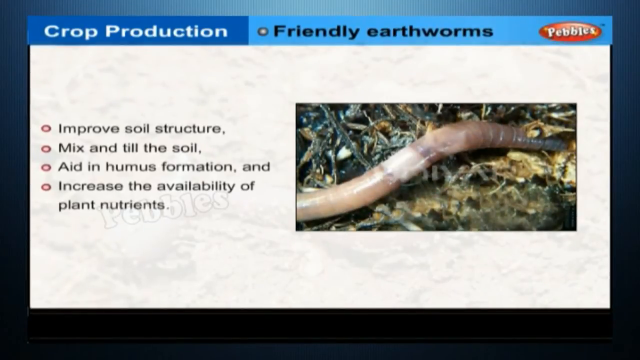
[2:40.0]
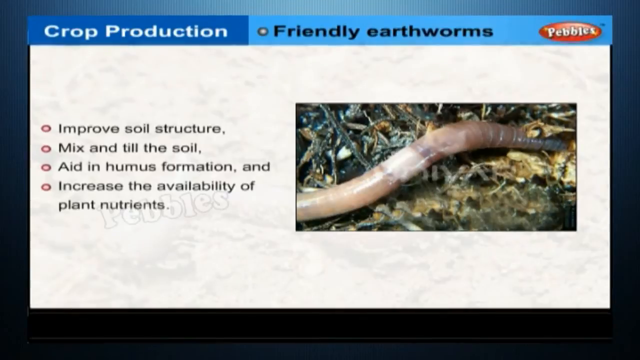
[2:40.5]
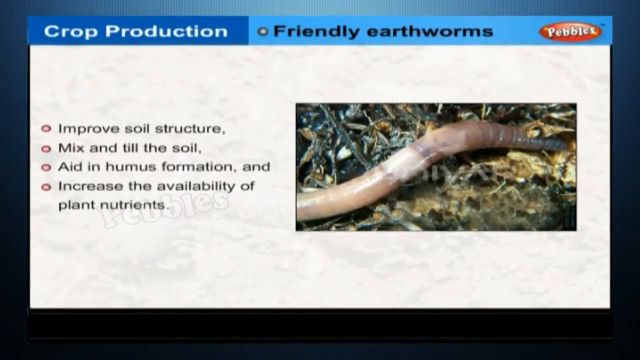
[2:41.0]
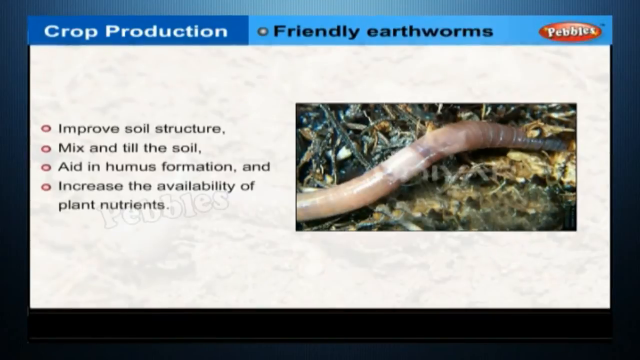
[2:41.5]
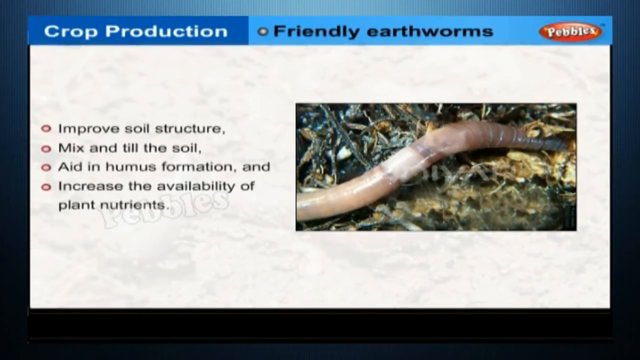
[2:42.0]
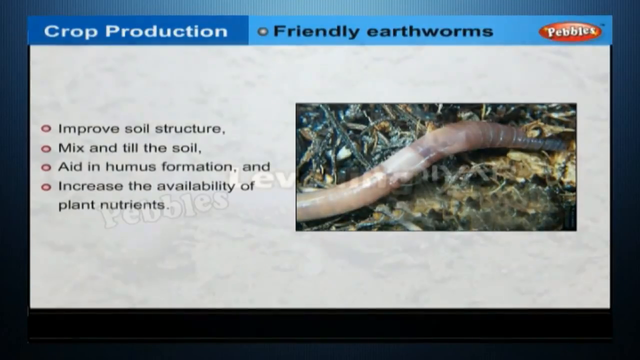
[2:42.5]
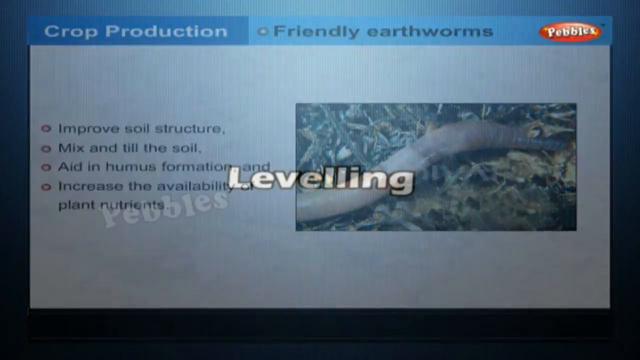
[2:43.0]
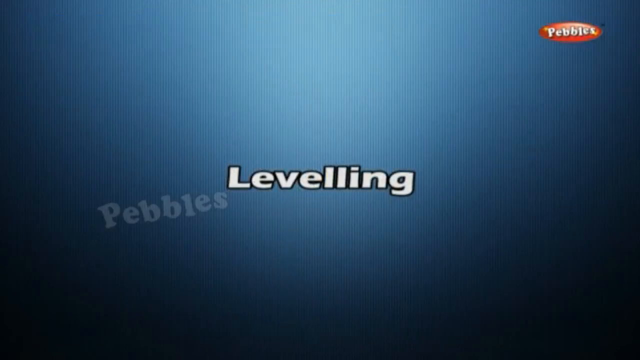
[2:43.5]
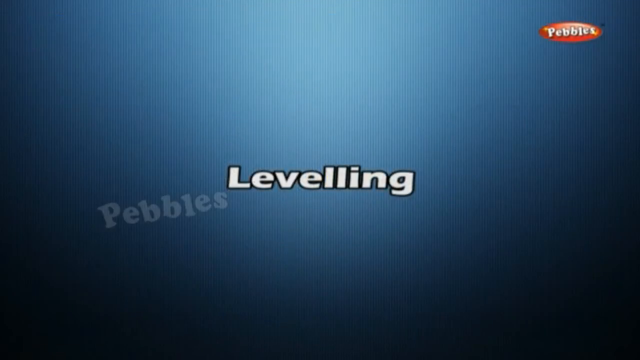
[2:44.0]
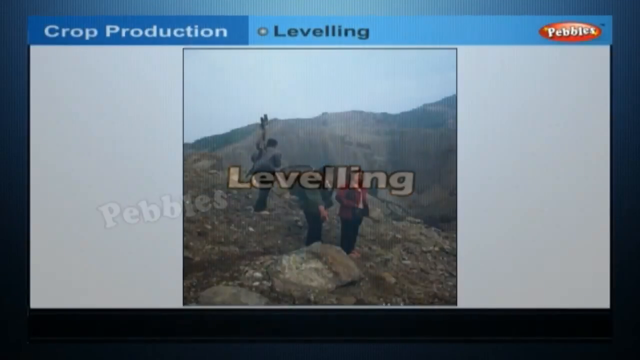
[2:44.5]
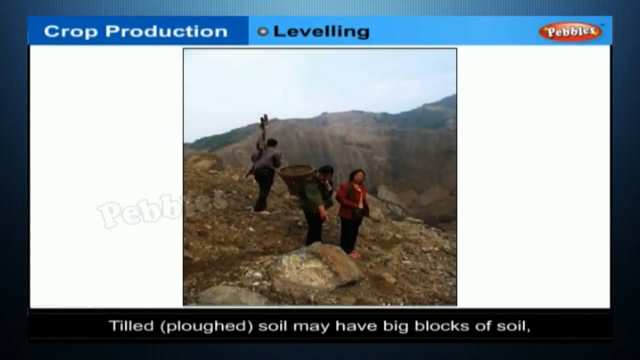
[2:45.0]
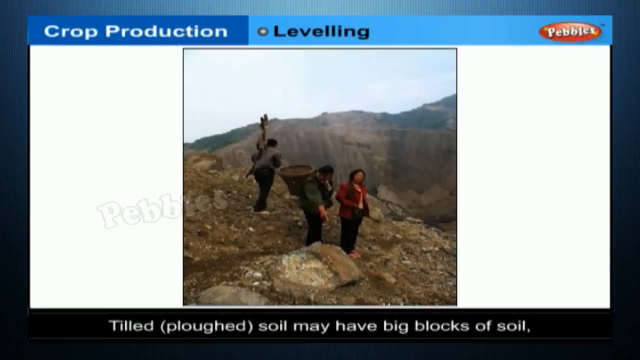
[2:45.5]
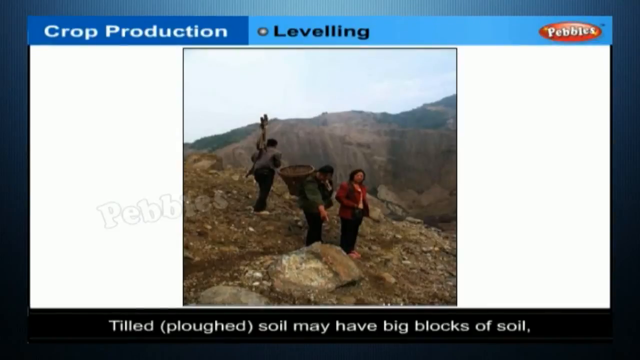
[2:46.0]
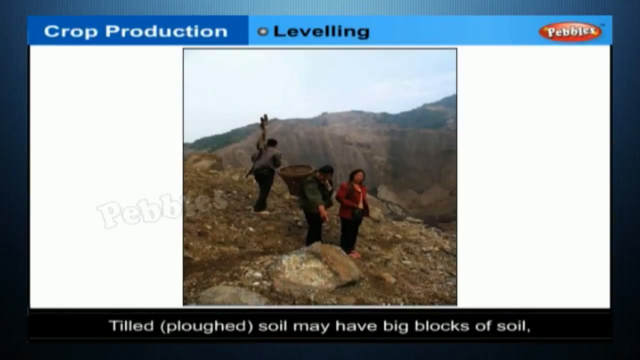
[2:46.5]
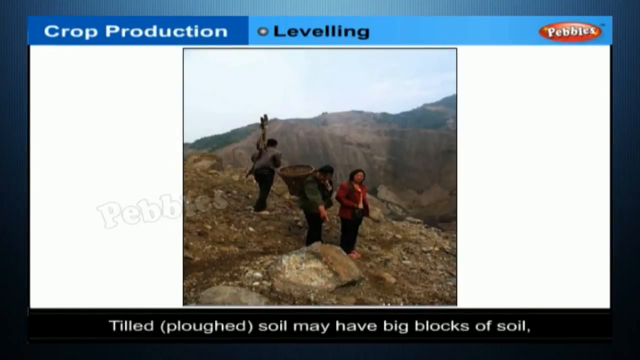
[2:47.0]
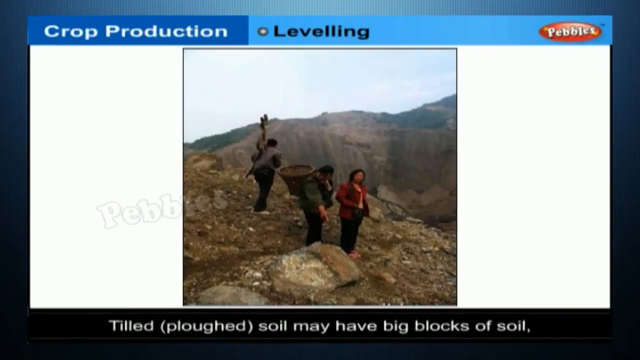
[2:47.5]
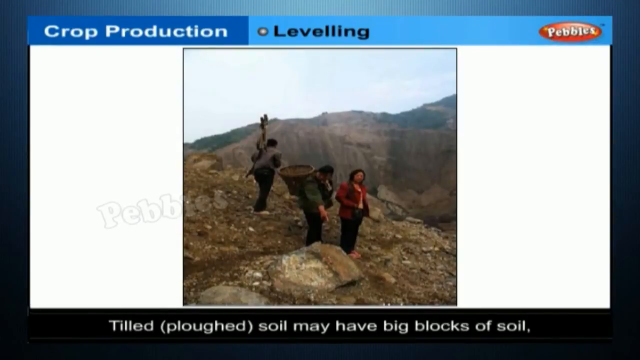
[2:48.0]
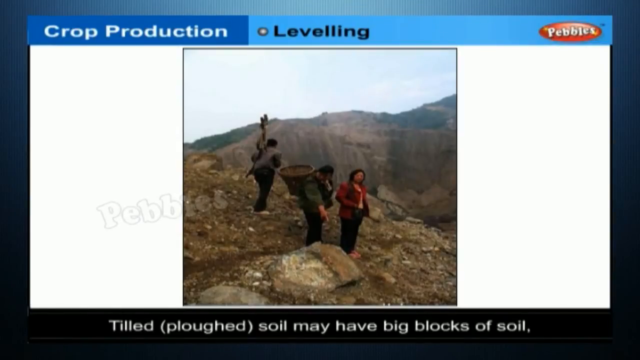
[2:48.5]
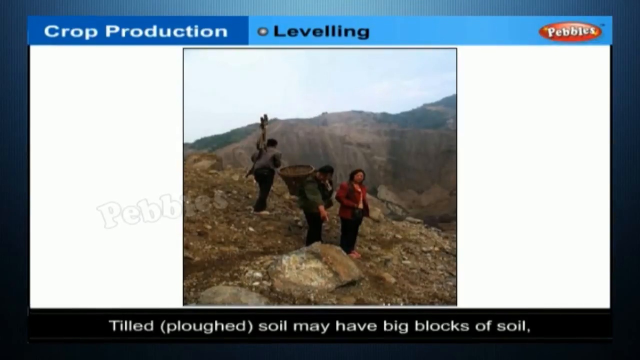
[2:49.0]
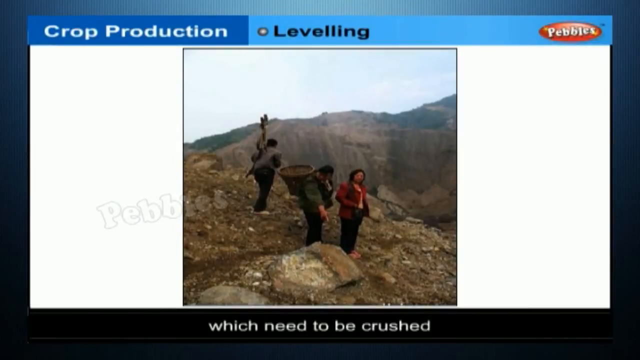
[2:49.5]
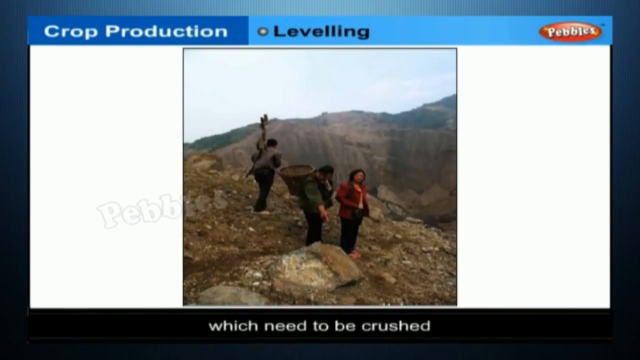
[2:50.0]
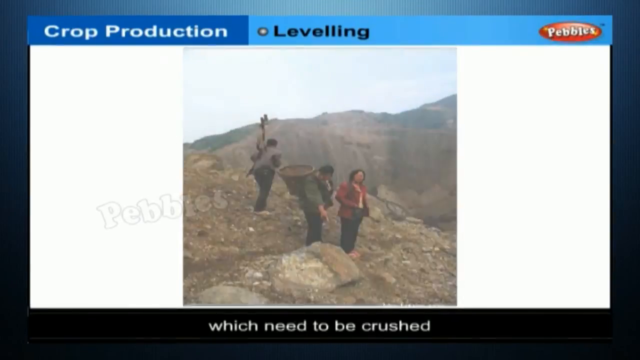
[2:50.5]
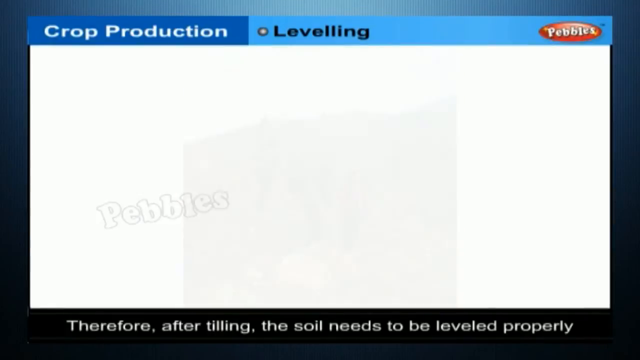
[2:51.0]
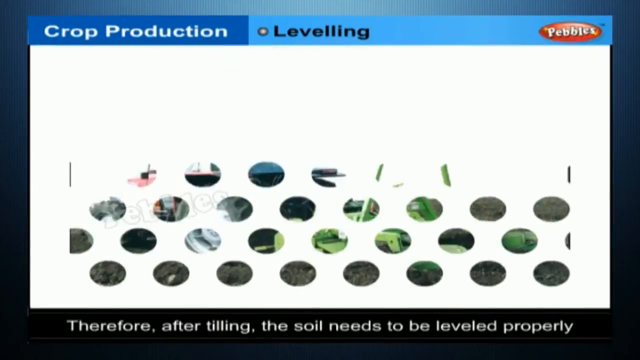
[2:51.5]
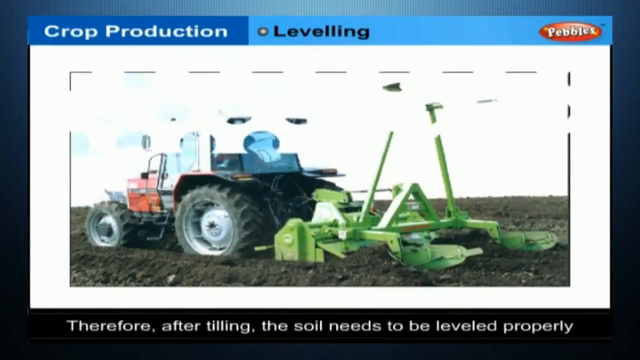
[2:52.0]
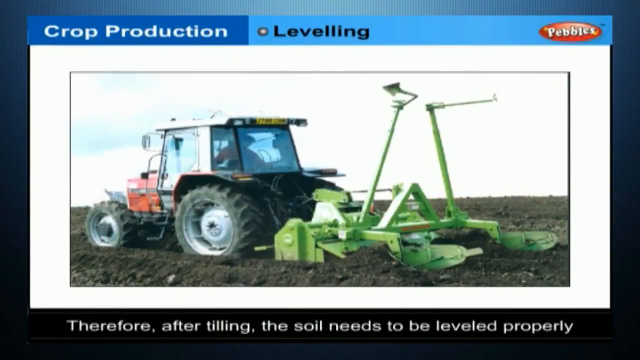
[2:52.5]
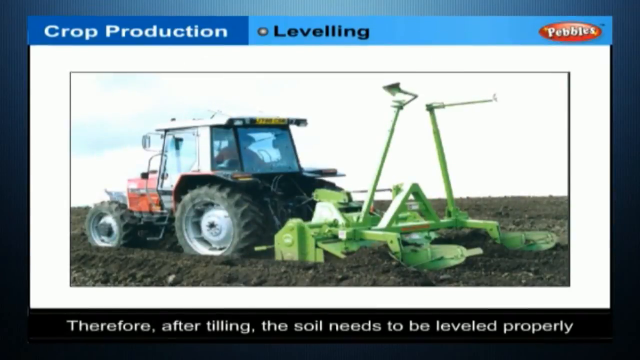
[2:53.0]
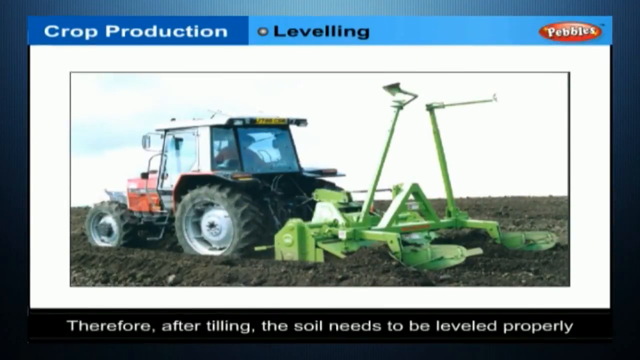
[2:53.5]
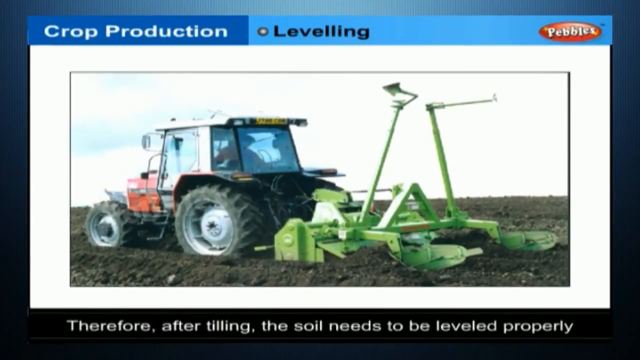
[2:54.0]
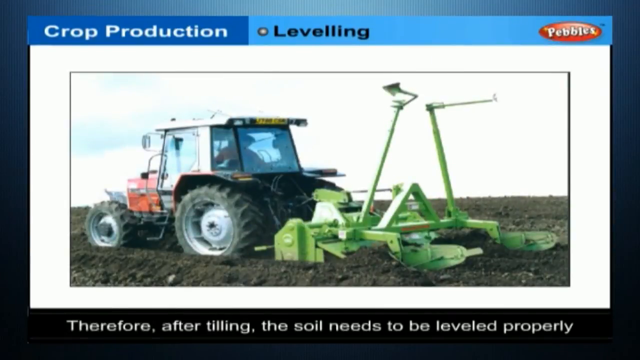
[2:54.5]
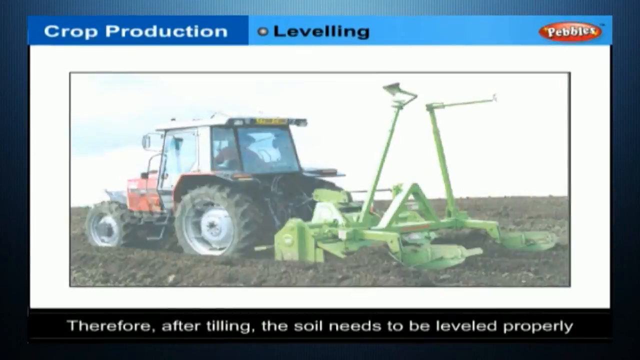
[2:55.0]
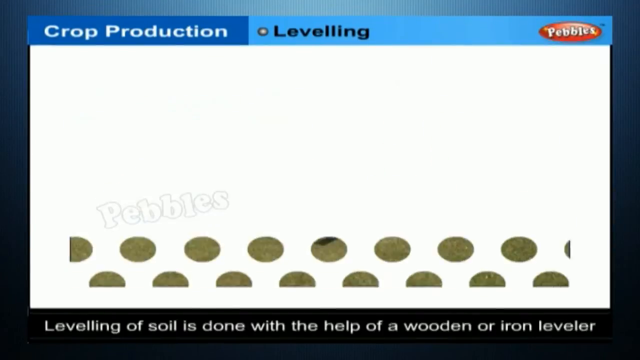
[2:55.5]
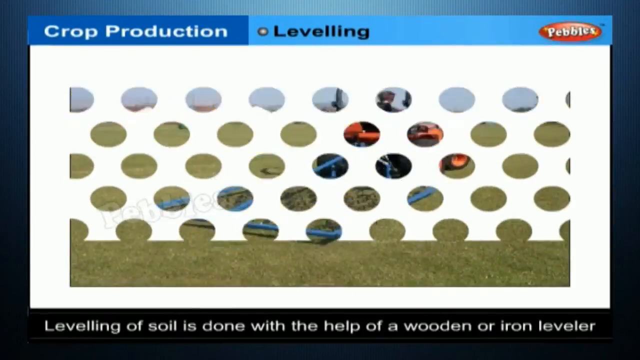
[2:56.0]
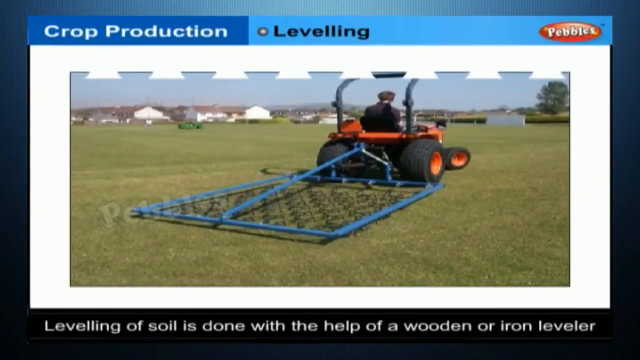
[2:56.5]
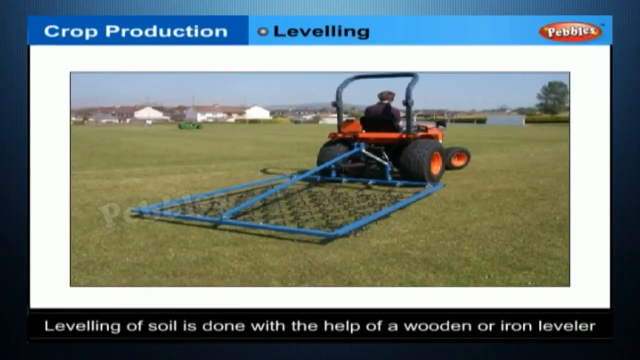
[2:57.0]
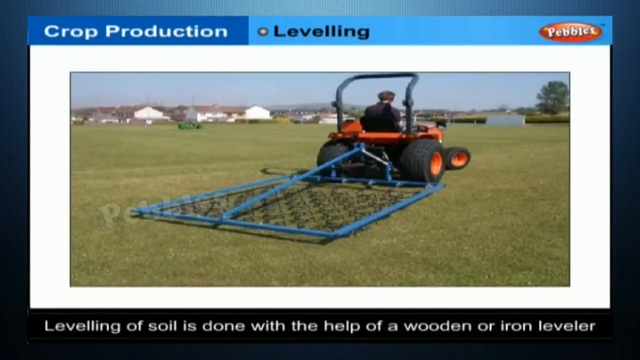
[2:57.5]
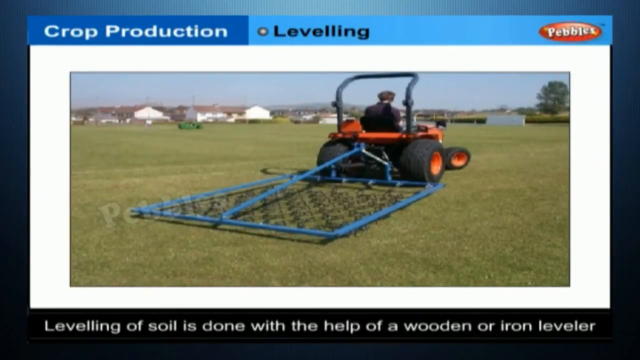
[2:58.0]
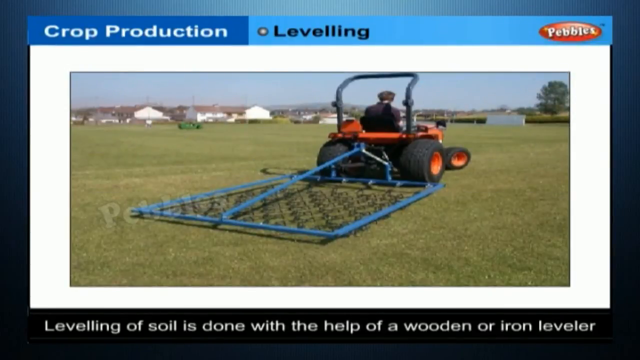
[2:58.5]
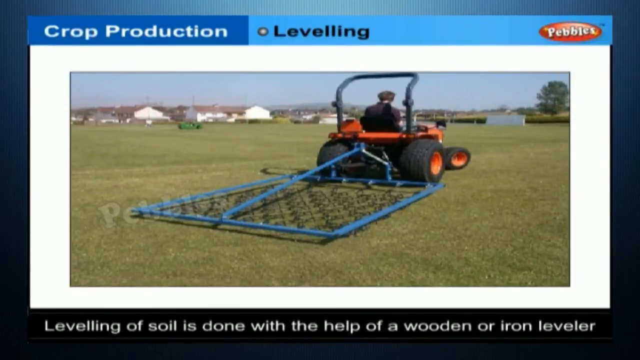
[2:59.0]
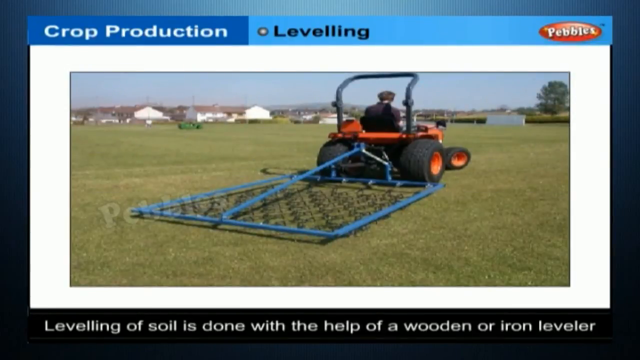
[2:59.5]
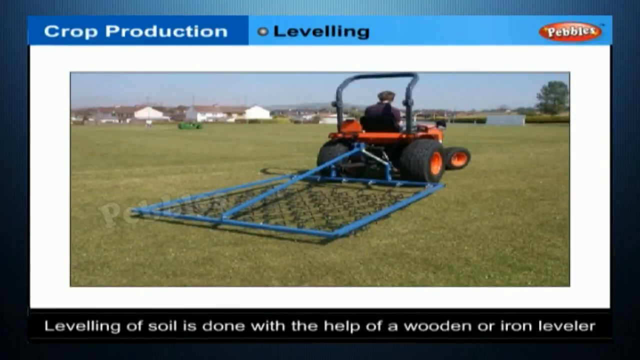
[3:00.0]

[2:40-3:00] The friendly earthworms section continues with a close-up picture of an earthworm on a surface of debris. On the left-hand side of the screen are the benefits of earthworms, including improved soil structure, aid in humus formation and increase the availability of plant nutrients. Another title page, "Leveling", then appears on a blue background, followed by an image of three people walking on a rocky outcrop, the one in the centre with a basket on their back, in what looks like a mountainous area. The caption underneath reads "Tilled, ploughed soil may have big blocks of soil which need to be crushed." Next is an image of a tractor with a green plough behind it moving along a field where the soil has been levelled, with the caption at the bottom reading "Therefore after tilling the soil needs to be levelled properly. The levelling of soil is done with the help of a wooden or iron leveller." An image then shows a small tractor pulling a leveller, which has a frame with small hook-like chains underneath.